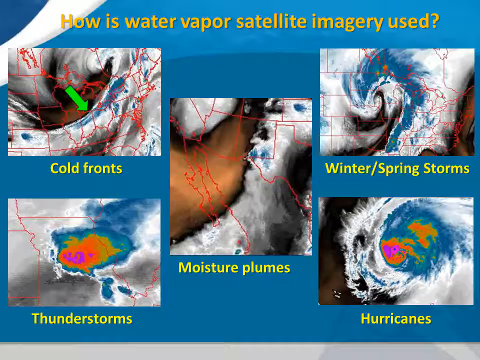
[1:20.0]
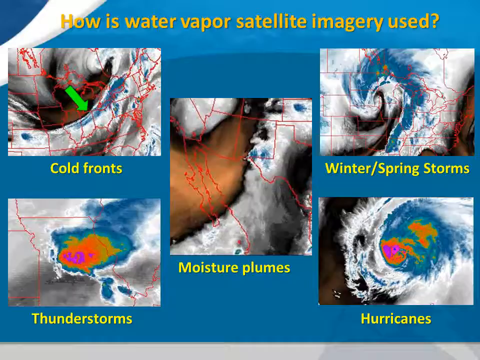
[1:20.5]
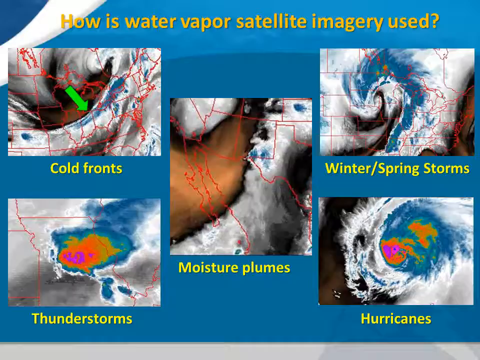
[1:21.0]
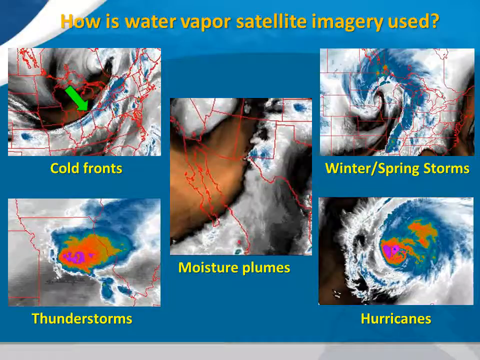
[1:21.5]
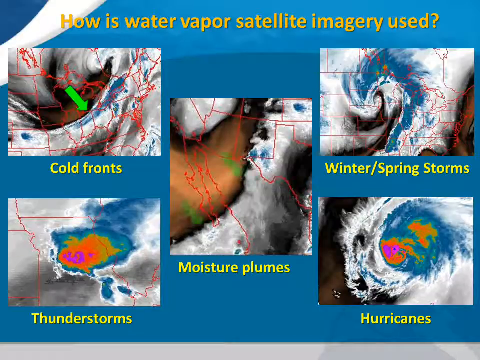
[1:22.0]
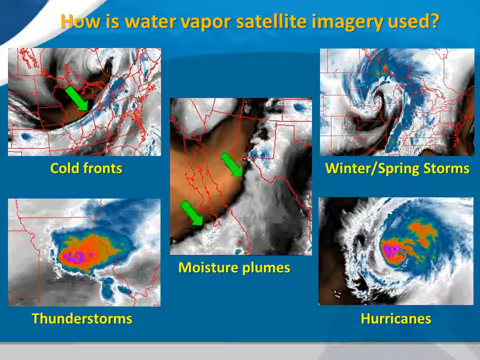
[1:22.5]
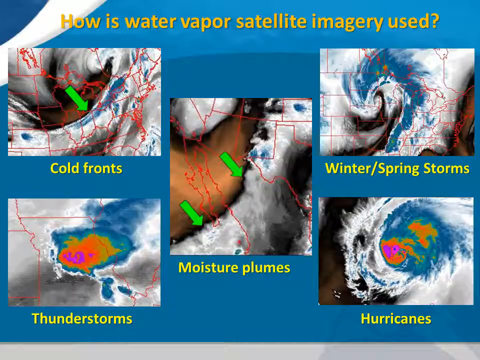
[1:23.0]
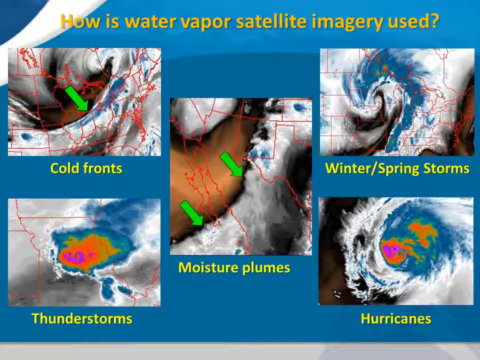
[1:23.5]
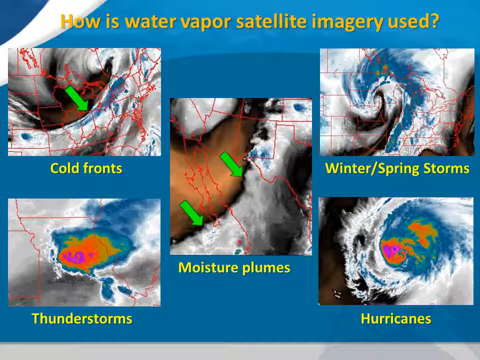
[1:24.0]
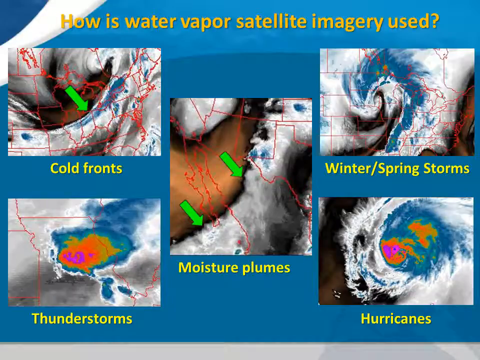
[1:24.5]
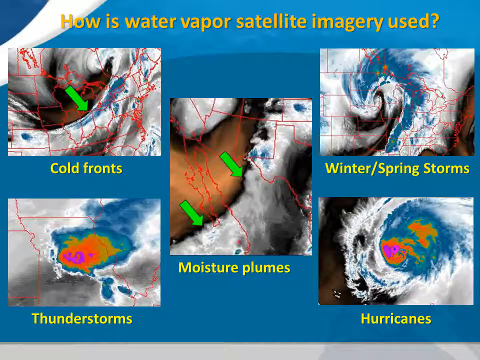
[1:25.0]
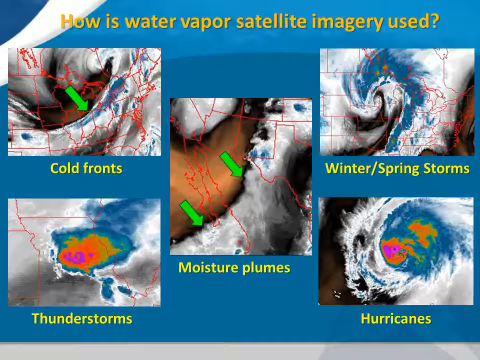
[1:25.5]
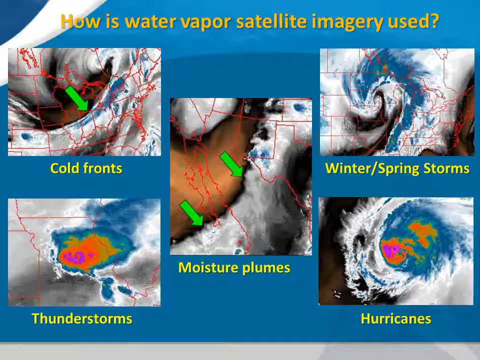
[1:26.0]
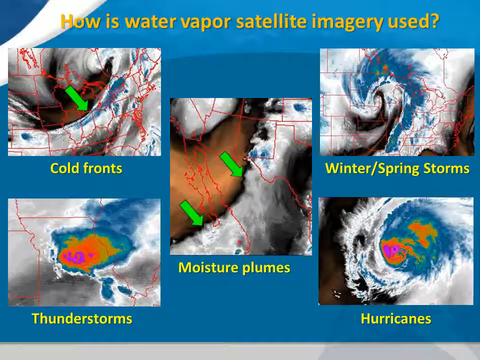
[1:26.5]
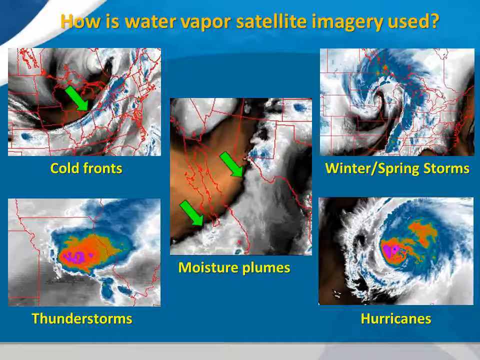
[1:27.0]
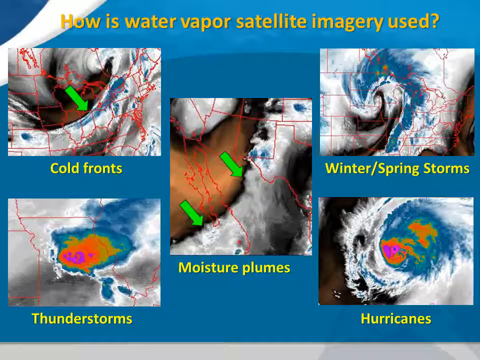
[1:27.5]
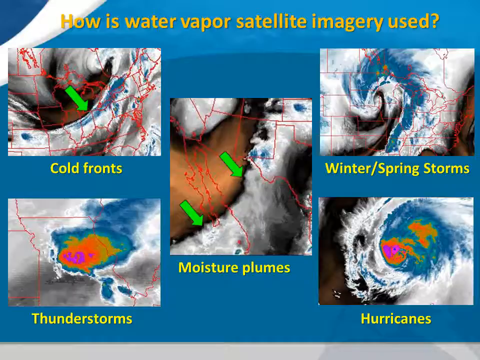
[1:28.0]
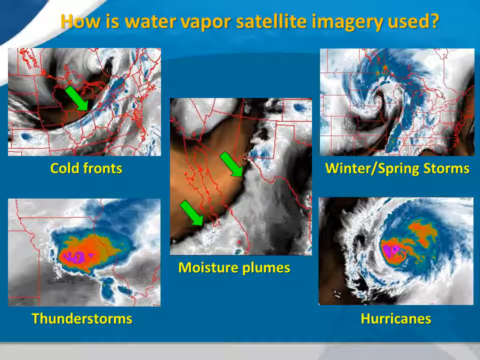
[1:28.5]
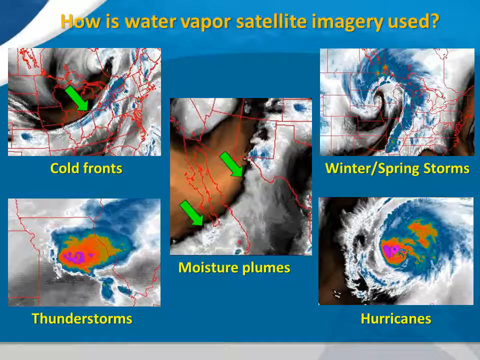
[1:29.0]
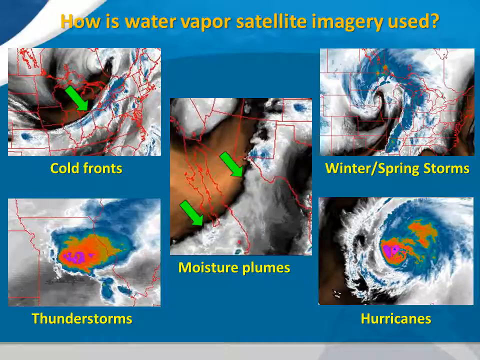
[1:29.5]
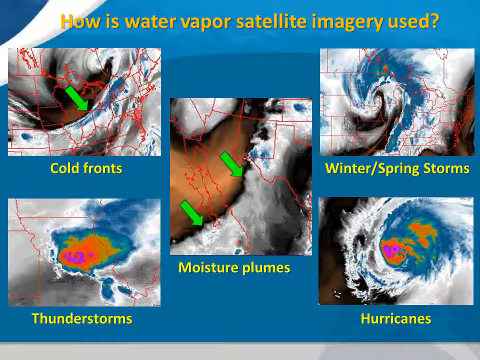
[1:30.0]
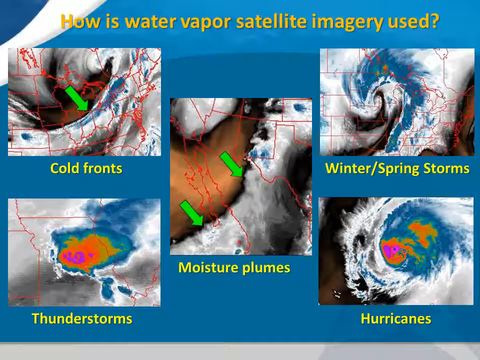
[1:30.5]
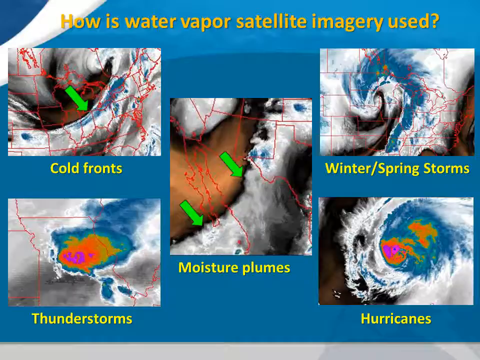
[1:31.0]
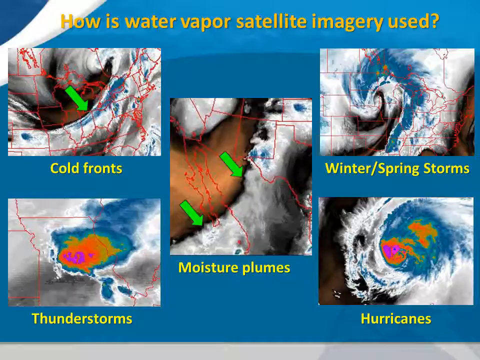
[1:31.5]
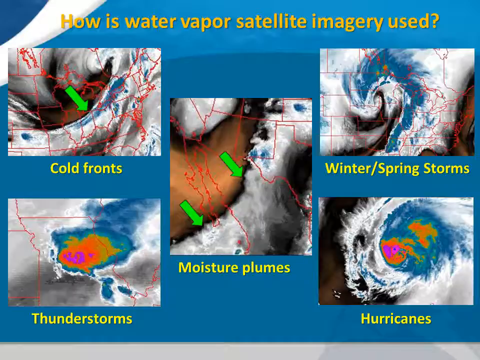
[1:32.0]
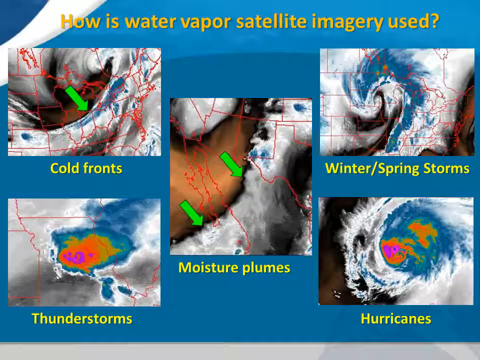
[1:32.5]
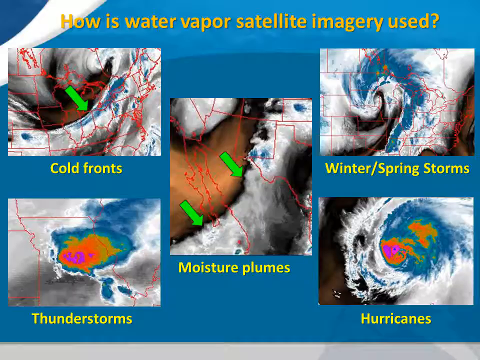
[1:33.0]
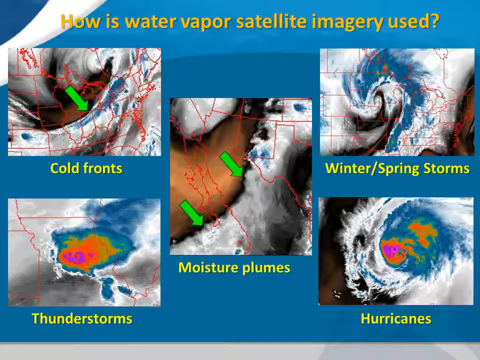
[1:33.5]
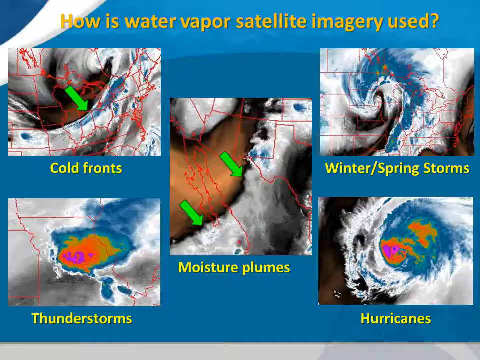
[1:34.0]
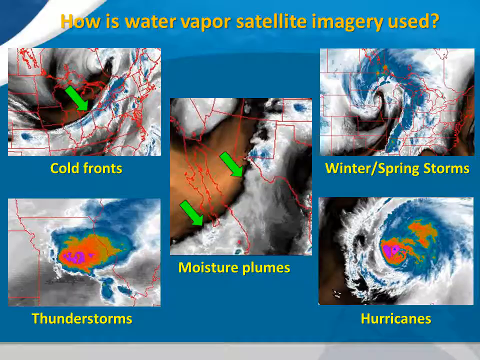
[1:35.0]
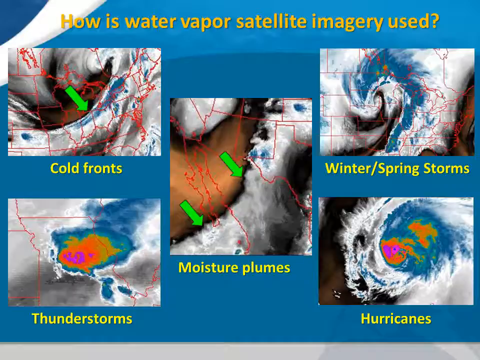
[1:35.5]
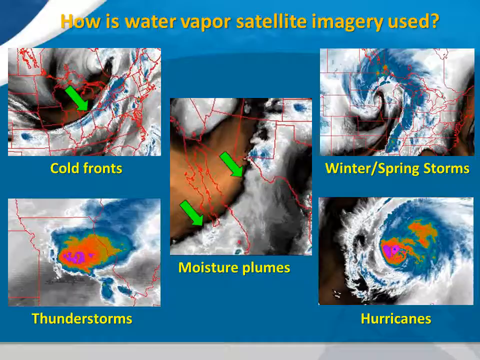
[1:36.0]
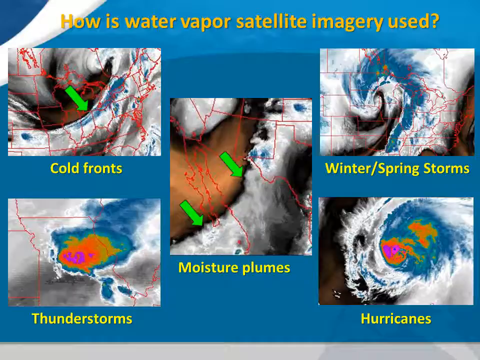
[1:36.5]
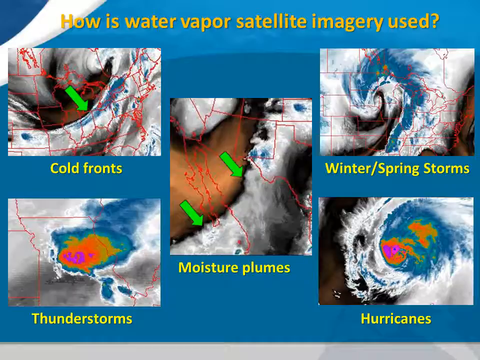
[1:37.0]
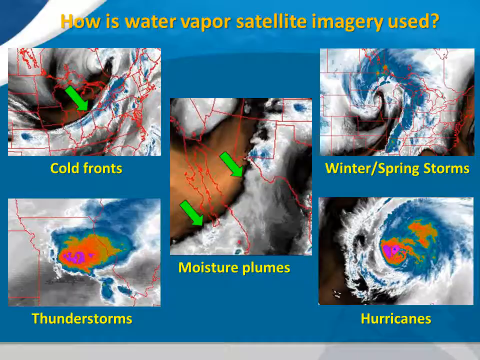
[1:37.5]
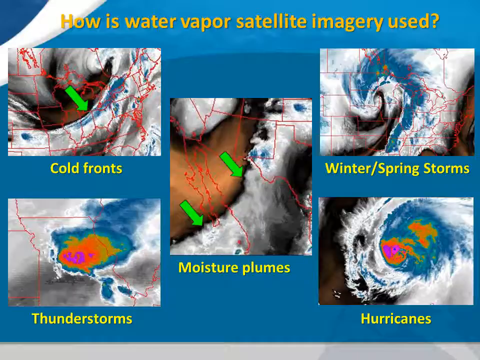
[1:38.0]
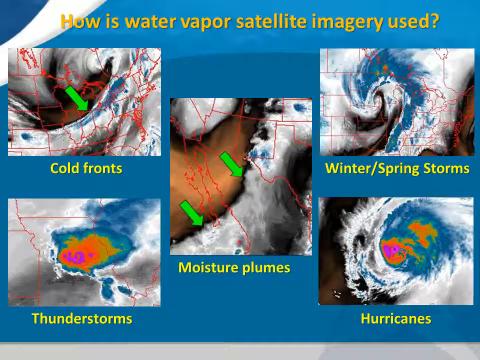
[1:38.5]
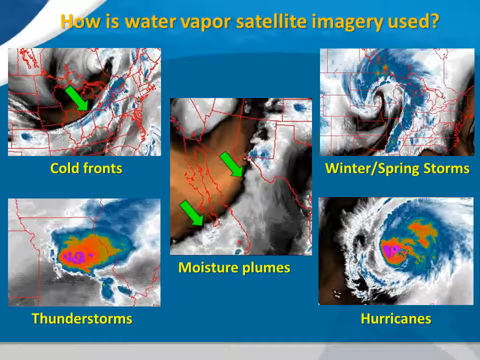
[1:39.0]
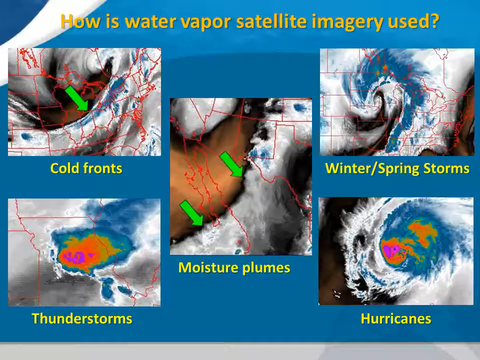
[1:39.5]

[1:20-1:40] On a light blue background, yellow text at the top of the screen reads "how is water vapor satellite imagery used?" Below it are five images showing different sections of the United States map overlay, with the states outlined in red. The top left image shows the northeastern United States with a green arrow pointing southeast, and below it yellow letters read "cold fronts." The bottom left image shows one state that might be Iowa, though it is hard to tell because the whole state is not visible; it has cloud imagery over it in blue, light blue, dark blue, yellow, orange, red, green, and purple, and yellow text below reads "thunderstorms." The middle image shows the southwestern United States and part of Mexico, with yellow text below it reading "moisture plumes."